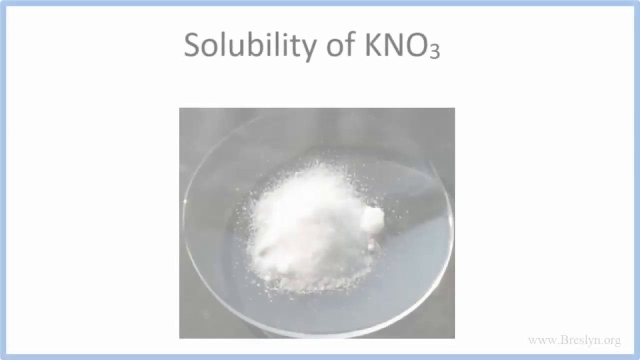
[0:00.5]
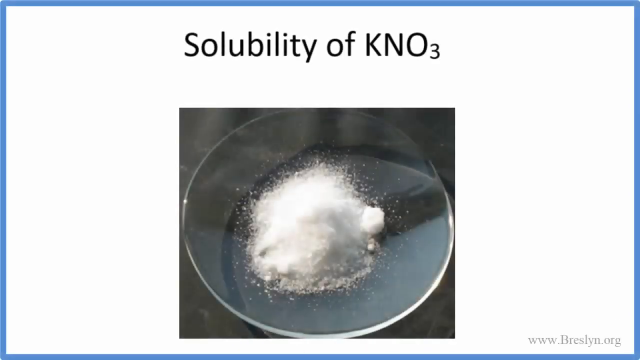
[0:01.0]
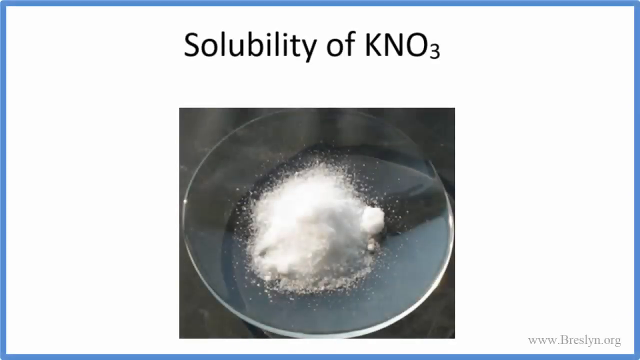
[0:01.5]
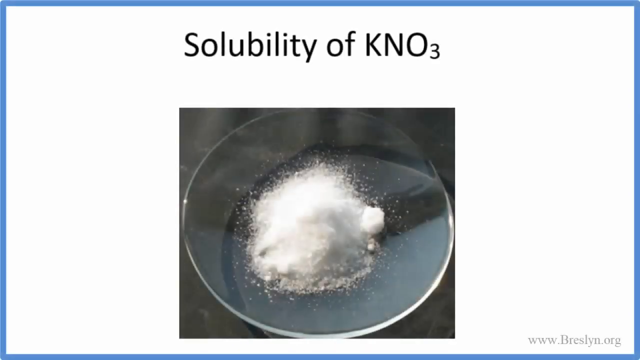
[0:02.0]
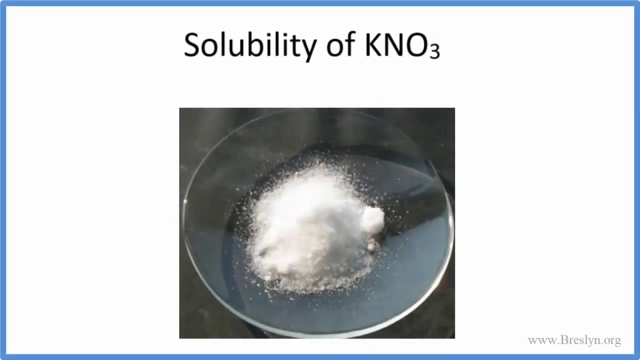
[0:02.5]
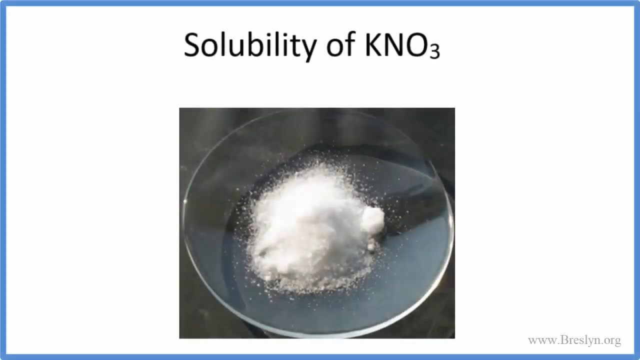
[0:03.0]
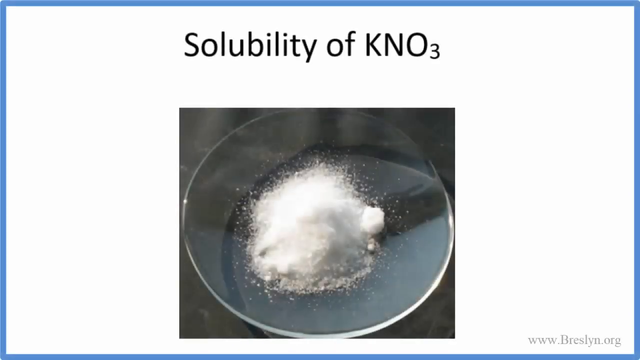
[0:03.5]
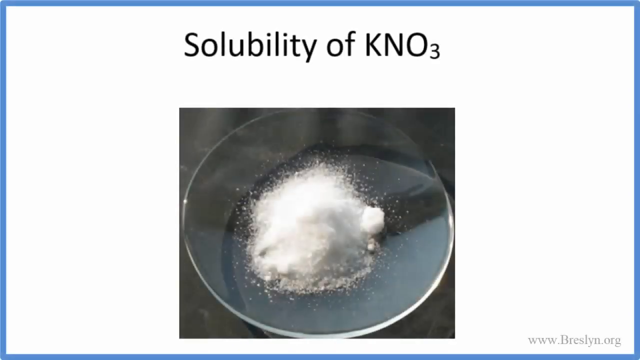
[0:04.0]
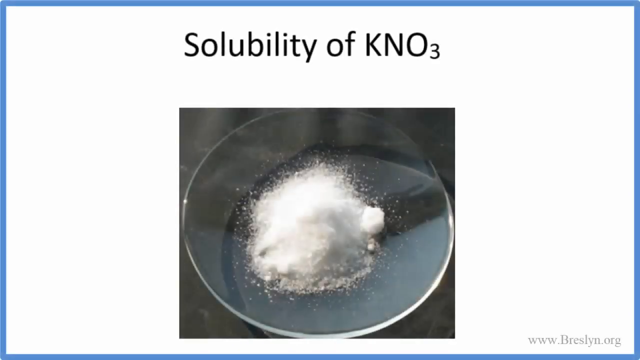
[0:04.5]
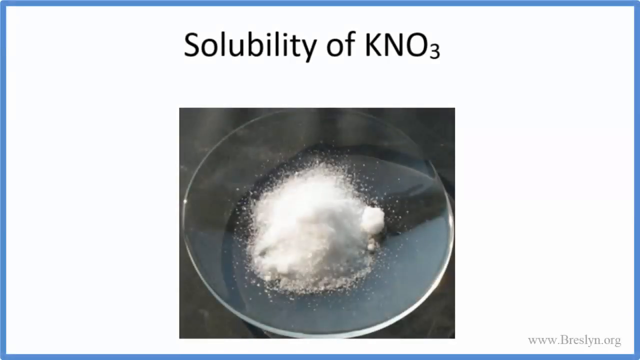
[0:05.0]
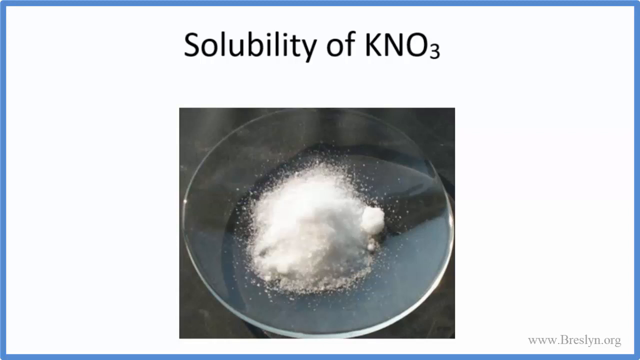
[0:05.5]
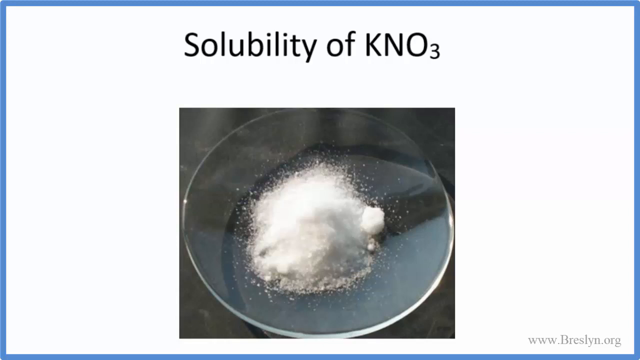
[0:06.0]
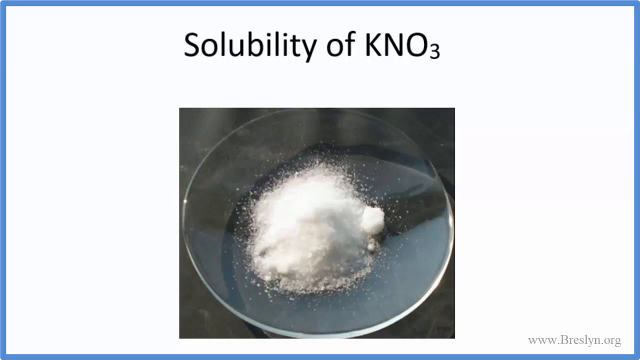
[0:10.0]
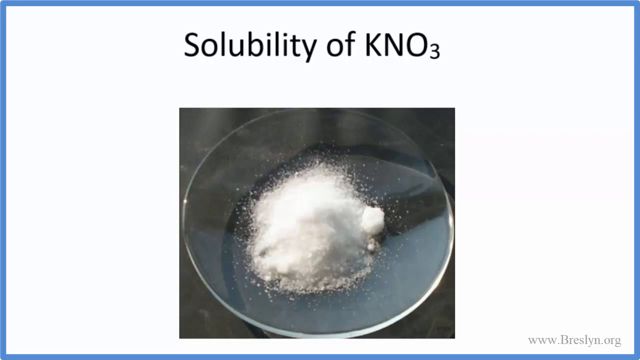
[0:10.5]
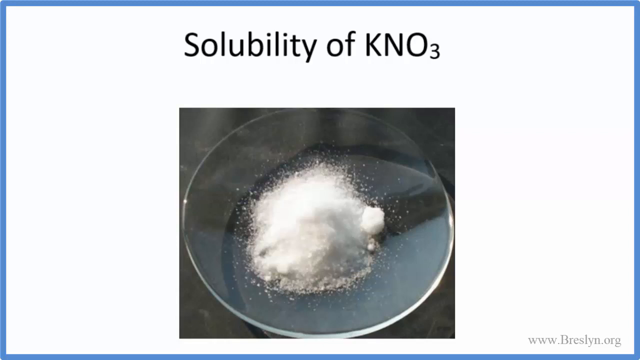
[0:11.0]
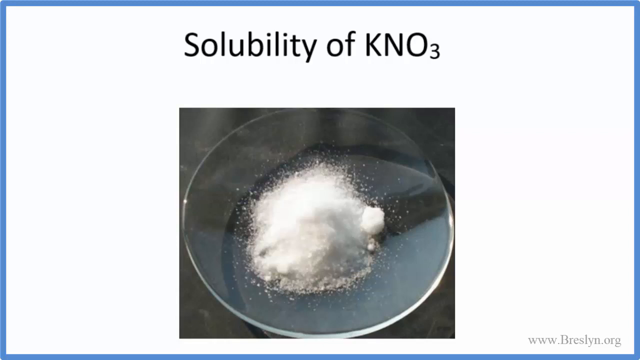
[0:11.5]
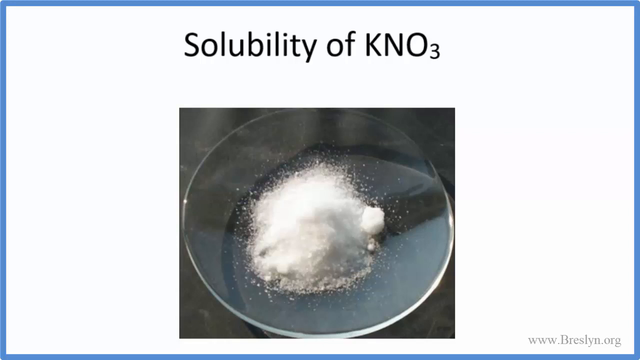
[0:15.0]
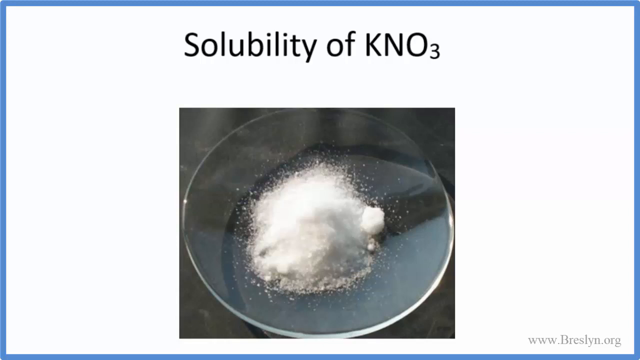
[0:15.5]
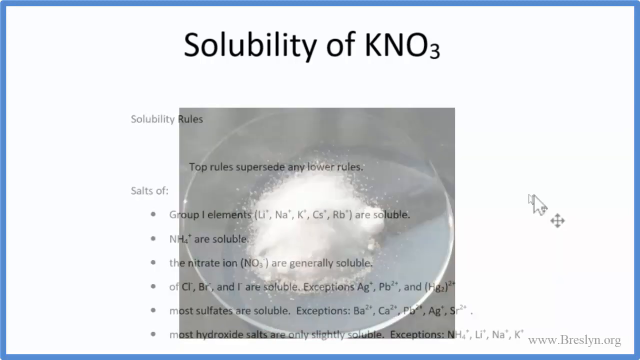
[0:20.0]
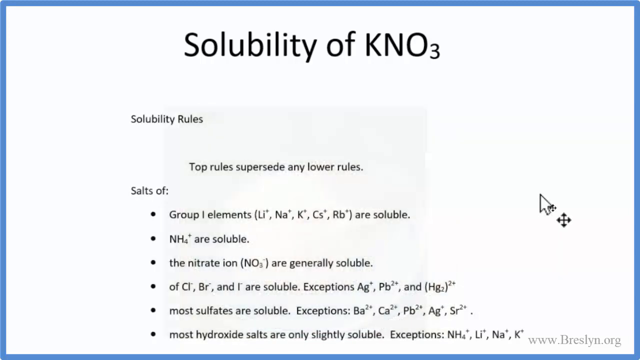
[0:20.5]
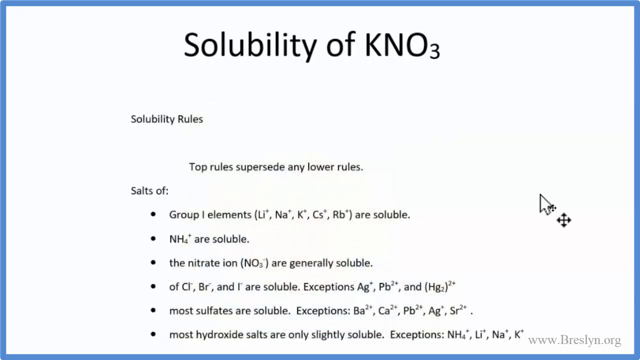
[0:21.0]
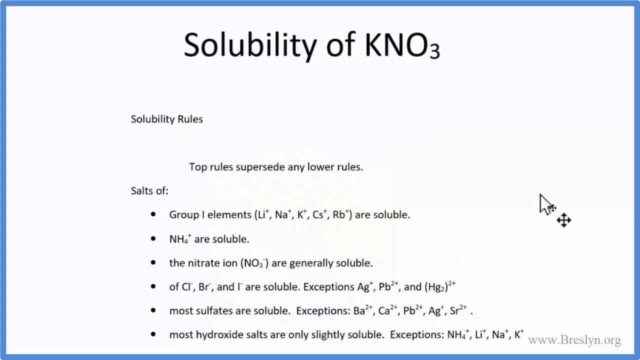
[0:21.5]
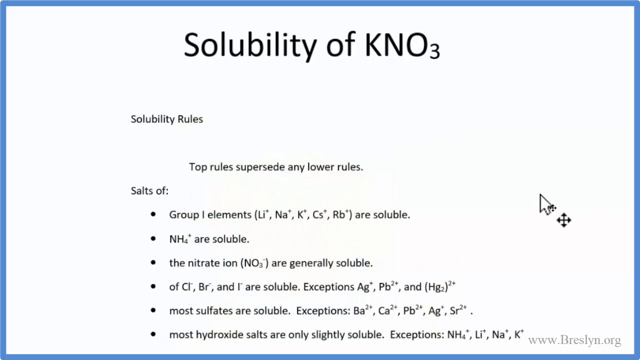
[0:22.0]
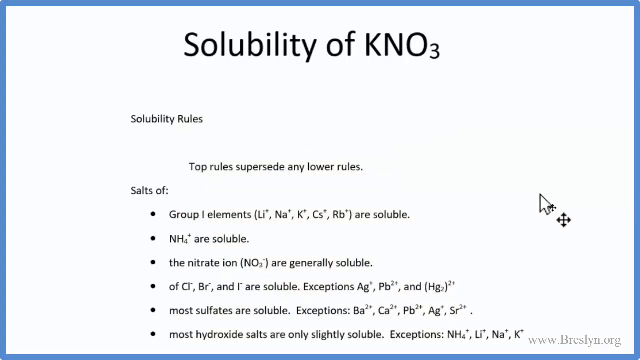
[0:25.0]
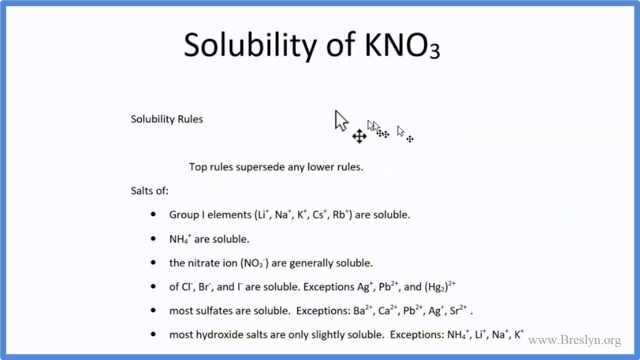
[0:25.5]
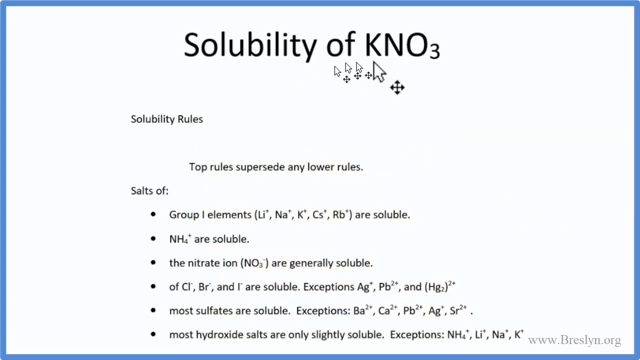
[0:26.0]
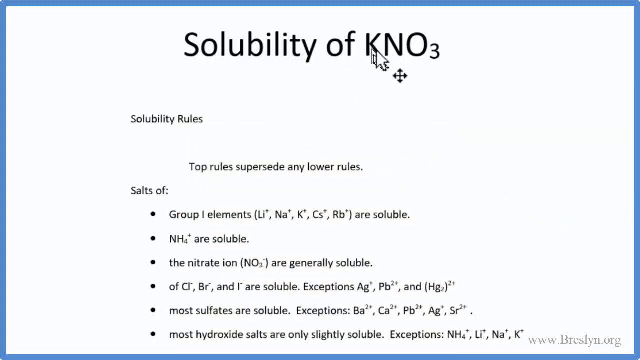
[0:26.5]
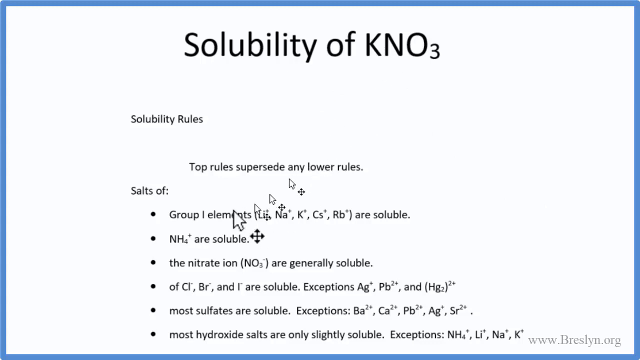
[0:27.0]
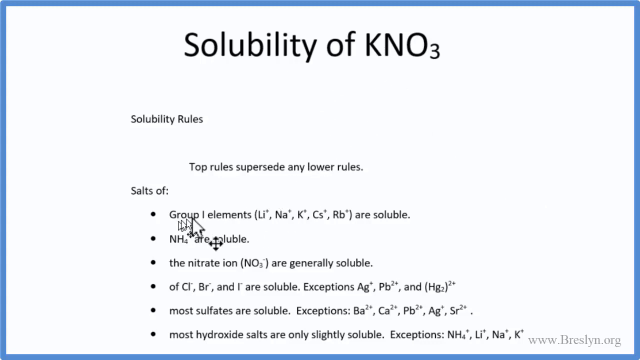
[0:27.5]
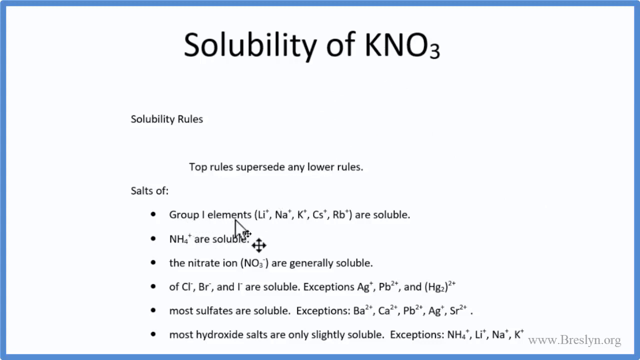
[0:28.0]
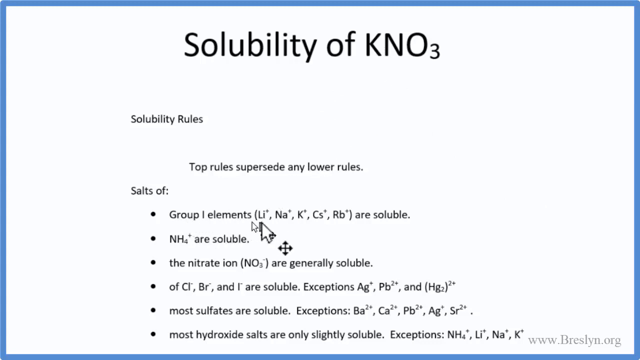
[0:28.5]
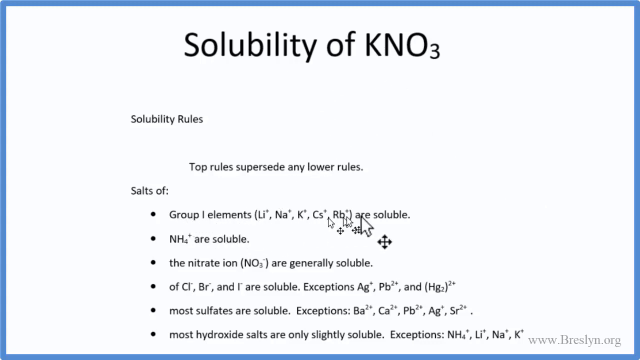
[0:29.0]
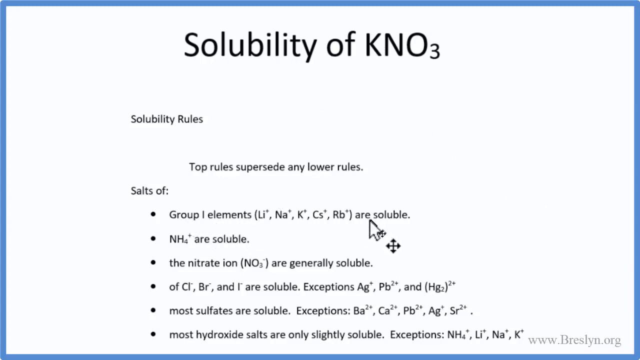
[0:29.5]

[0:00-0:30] The video starts with a white background and the text "solubility of KNO3." An image appears of a substance that resembles salt. This stays on screen for a while, and in the right-hand corner the text "www.breslin.org" is visible. The image then clears and the screen reads "solubility rules" and "top rules supersede any lower rules," followed by "salts of" and a set of bullet points. The first says group one elements L-I, N-A, K, C-S, R-B are soluble; the next says NH4 are soluble; another covers the nitrate ion NO3. Further down, Cl, Br and I are listed as soluble, with exceptions Ag, Pb and Hg2, where there appears to be a 2 outside the parentheses. Next it says most sulfates are soluble, with exceptions Ba, with what may be a 2 plus beside it, then Ca, then Pb and Ag.